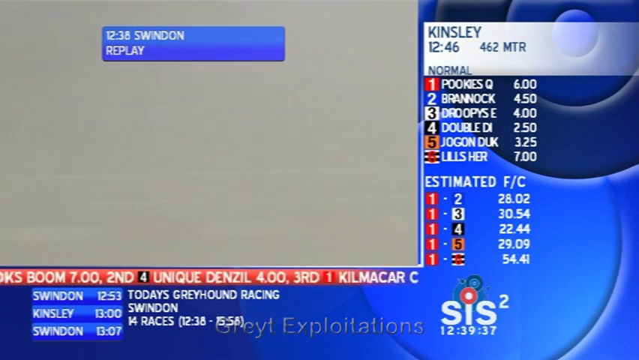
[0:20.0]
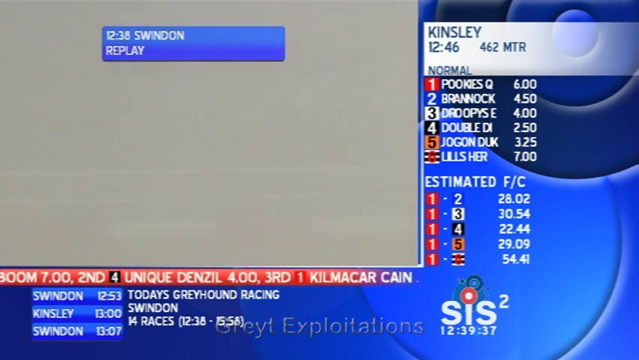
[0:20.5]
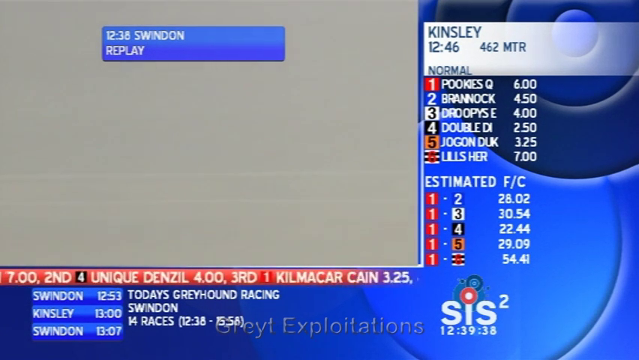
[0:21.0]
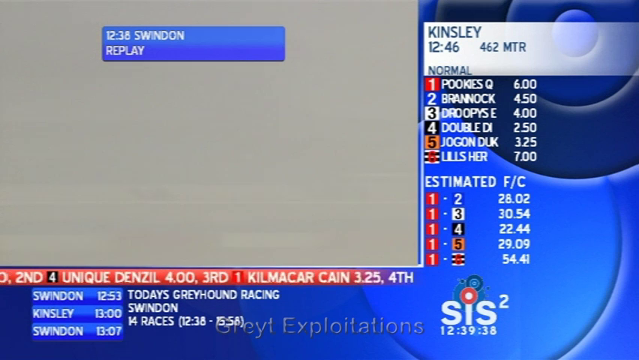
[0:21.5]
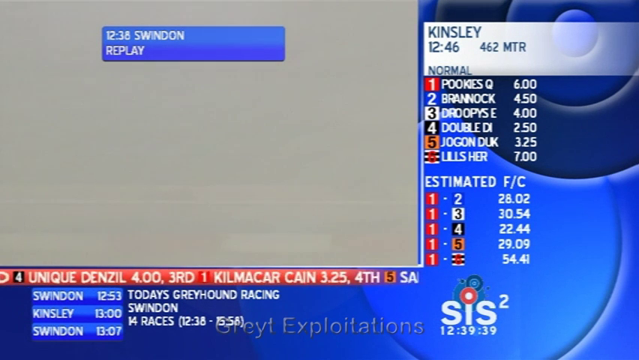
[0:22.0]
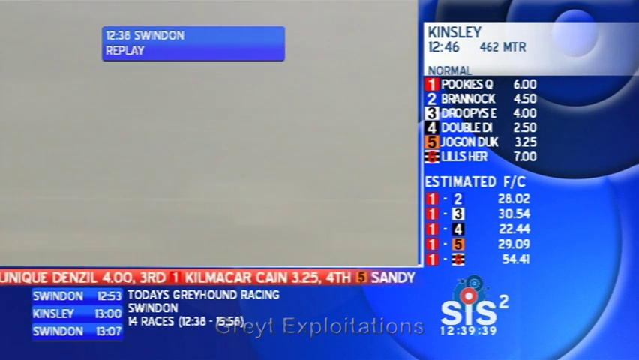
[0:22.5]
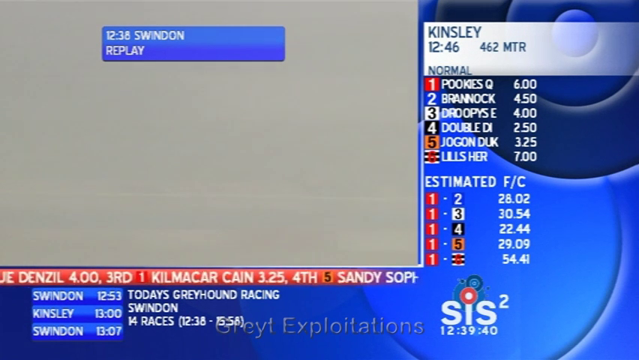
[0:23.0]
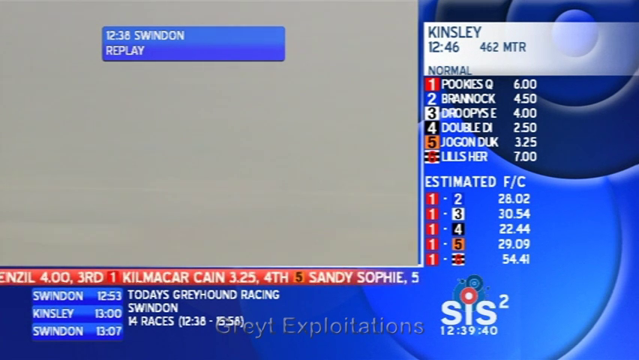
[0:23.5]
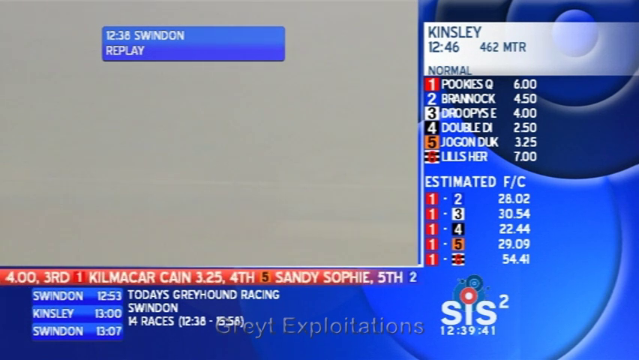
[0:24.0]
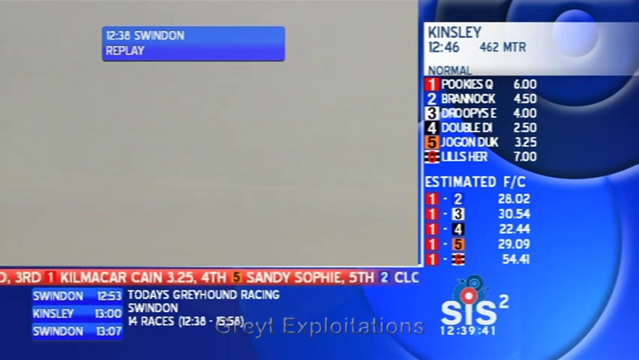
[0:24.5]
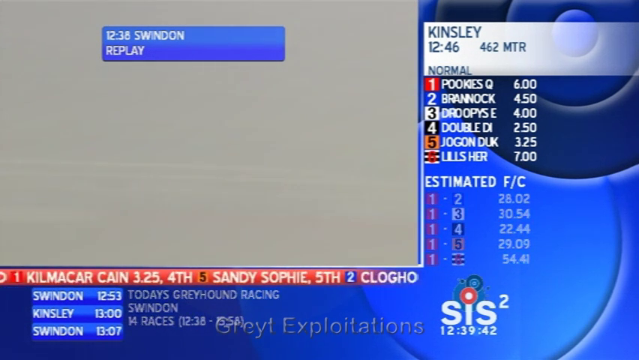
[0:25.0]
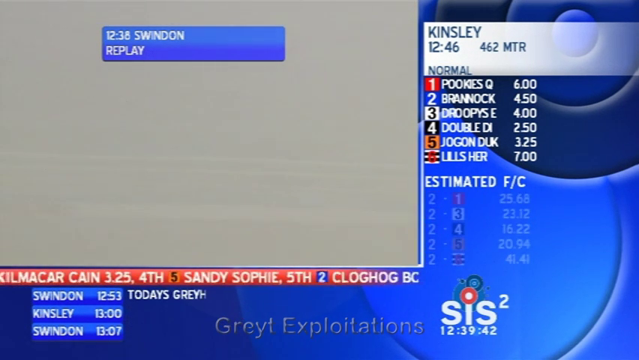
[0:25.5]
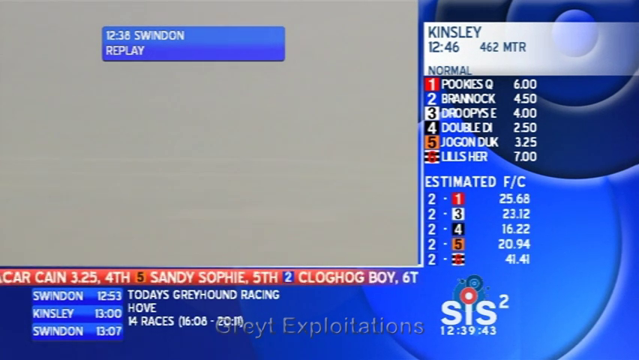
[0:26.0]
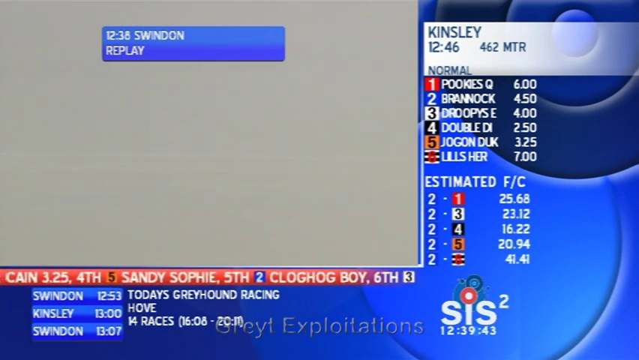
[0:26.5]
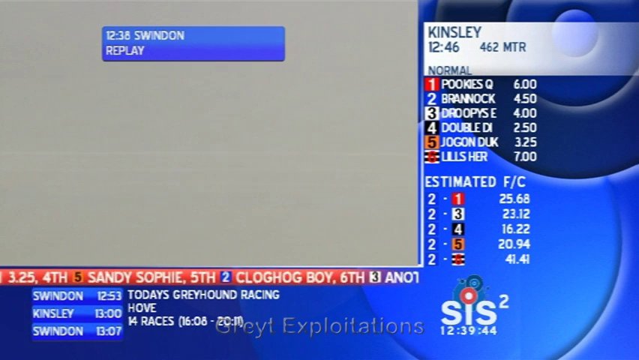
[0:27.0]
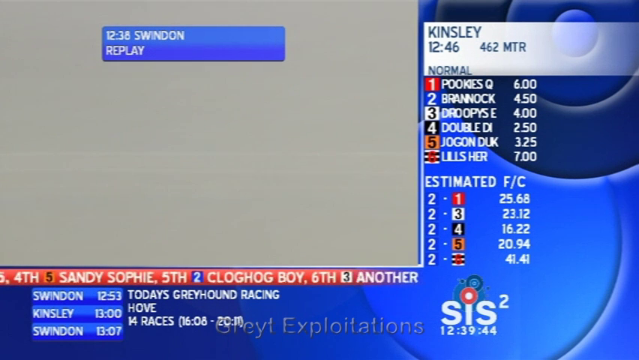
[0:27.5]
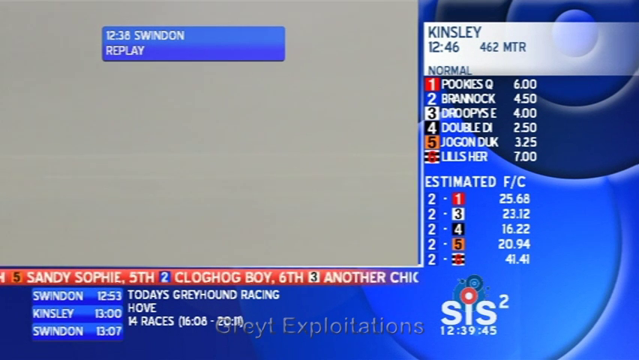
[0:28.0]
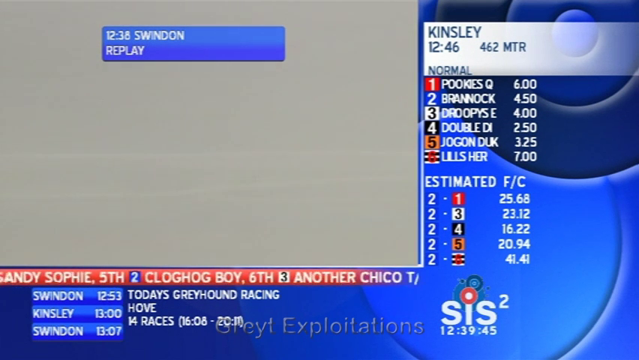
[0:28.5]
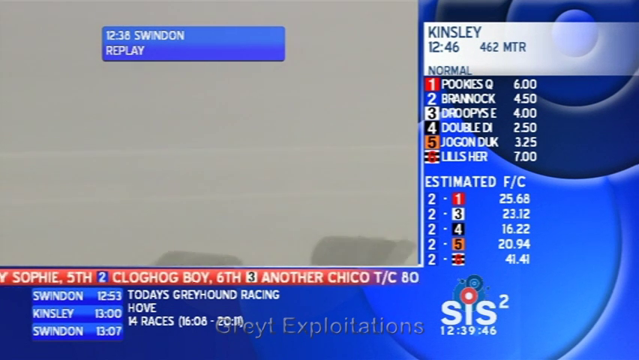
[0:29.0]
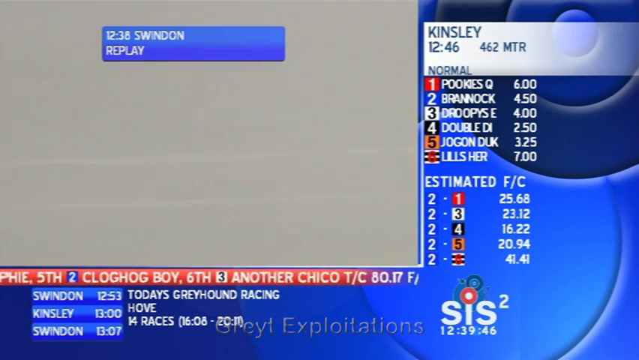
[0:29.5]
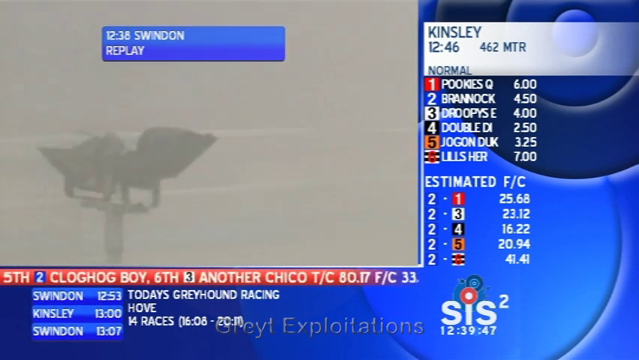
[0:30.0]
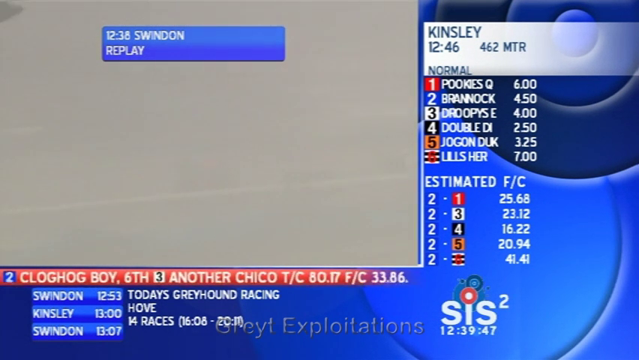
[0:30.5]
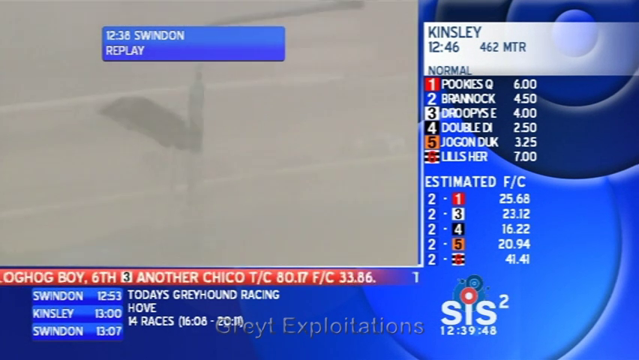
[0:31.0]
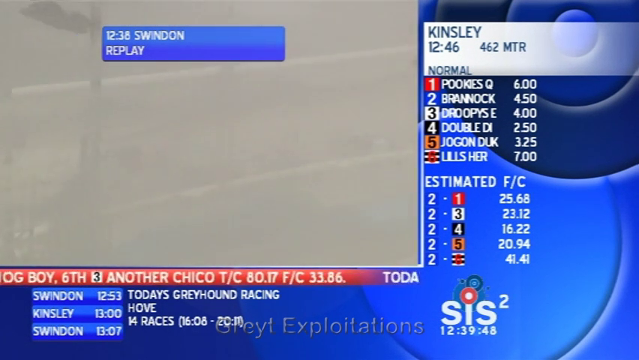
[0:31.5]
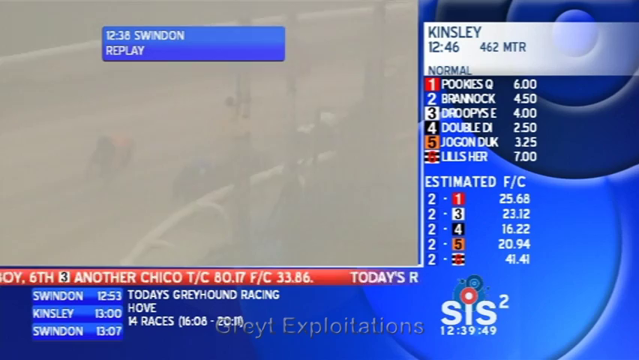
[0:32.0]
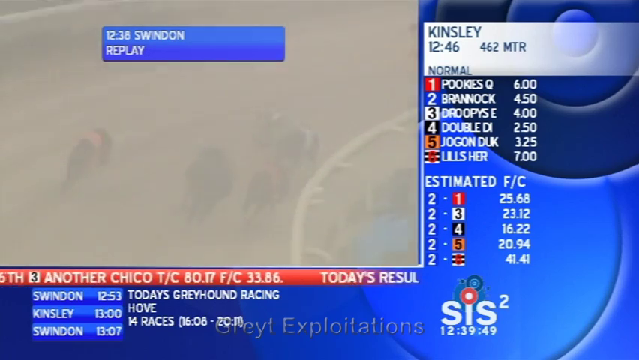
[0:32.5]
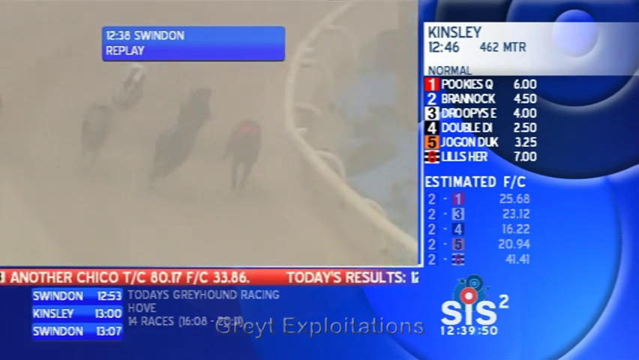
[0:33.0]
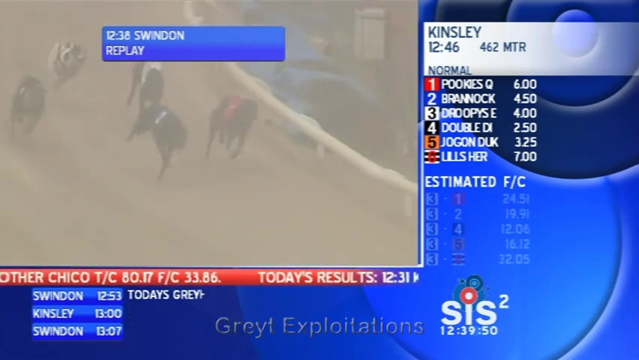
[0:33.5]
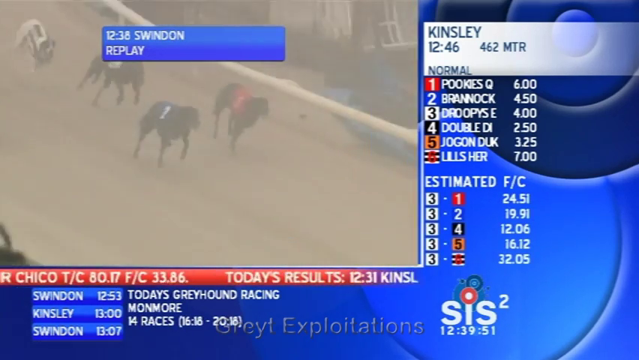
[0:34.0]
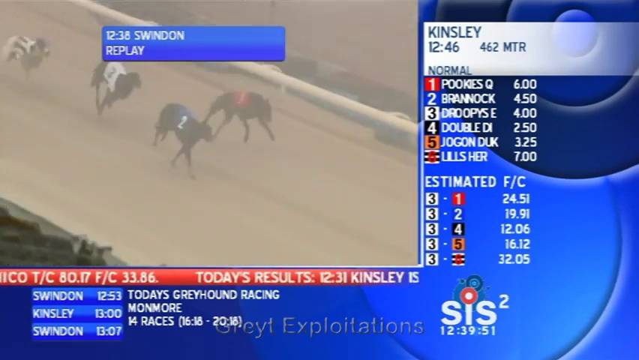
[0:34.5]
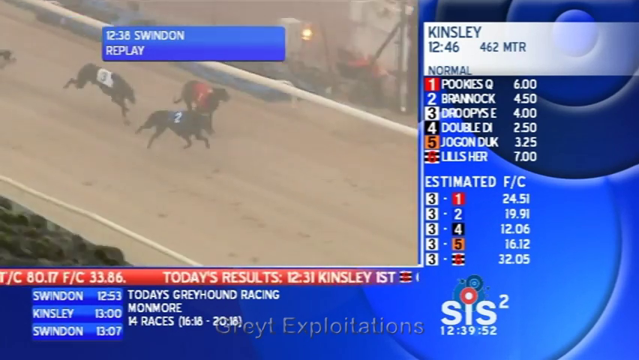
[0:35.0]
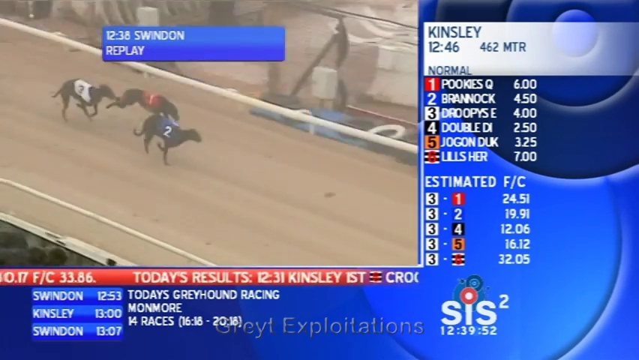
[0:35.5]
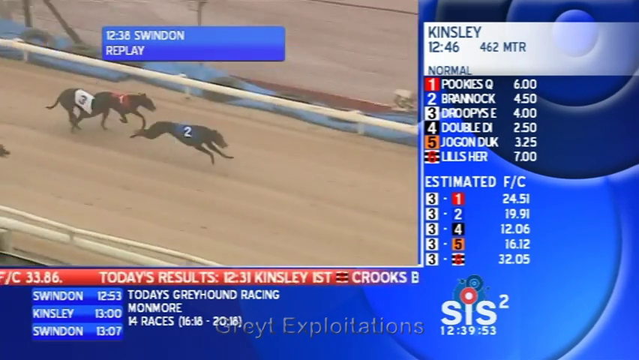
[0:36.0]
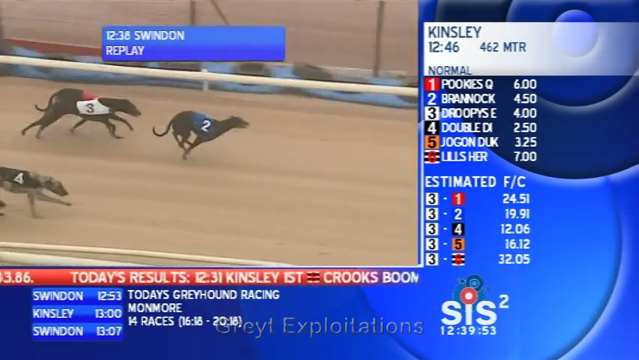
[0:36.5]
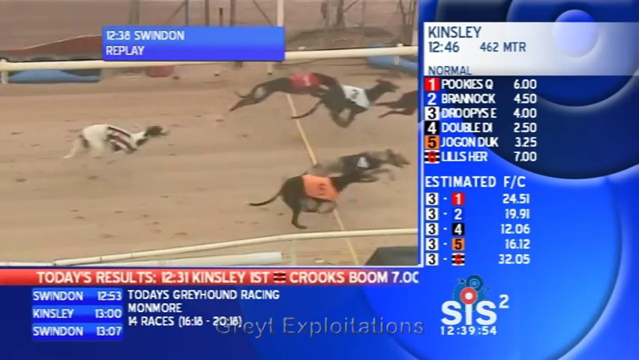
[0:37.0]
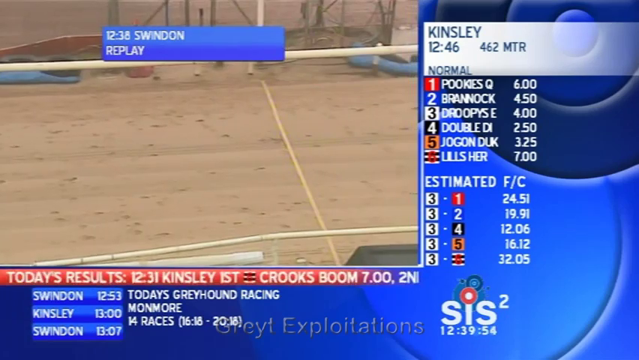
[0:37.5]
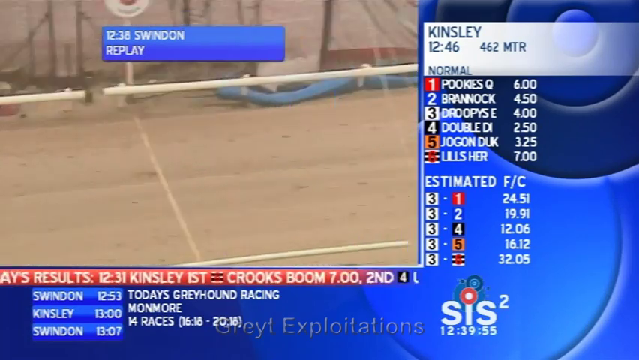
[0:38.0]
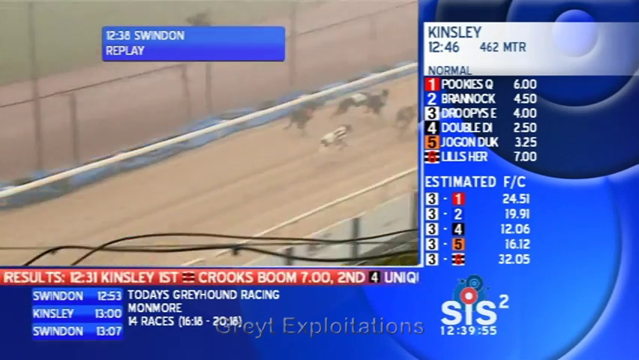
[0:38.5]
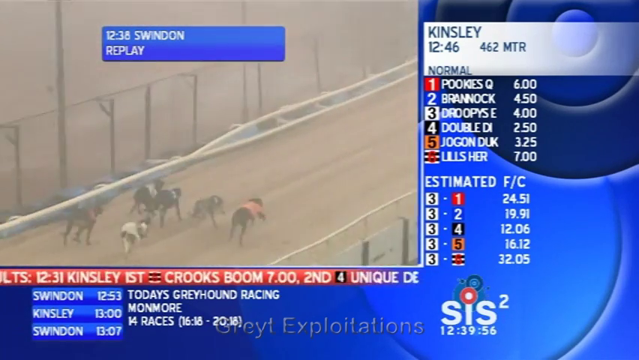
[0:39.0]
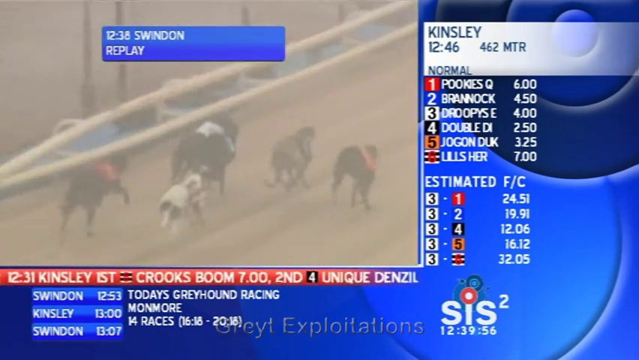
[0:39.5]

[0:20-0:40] The greyhound race at Swindon continues as a replay, labeled at the top of the screen in a blue rectangle. The race is in thick fog: the dogs can be seen moving, but it is almost impossible to see the dogs themselves. On the right of the screen is sort of a listing of the dogs and possibly their odds, and more information about the timing and location of the race is at the bottom of the screen. The camera keeps moving to the left and hardly anything is visible; maybe a railing shows, but no dogs can be identified. A white fence appears, along with maybe a couple of light fixtures closer to the camera. The dogs, still kind of blurry, turn a corner on the dirt track and enter what looks like the final straight. The dog with a blue cover, number two, is in the lead and crosses a white finish line across the track first, with the other greyhounds crossing only a couple of seconds after the winner. The camera follows them as they continue up the track, still running quite fast and starting to turn to the left.